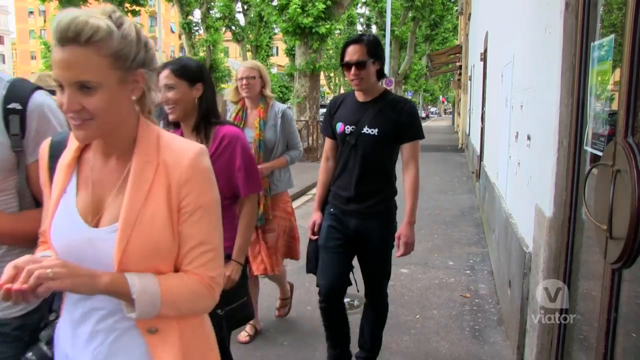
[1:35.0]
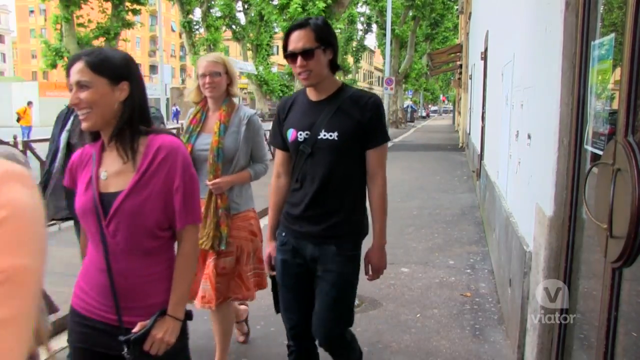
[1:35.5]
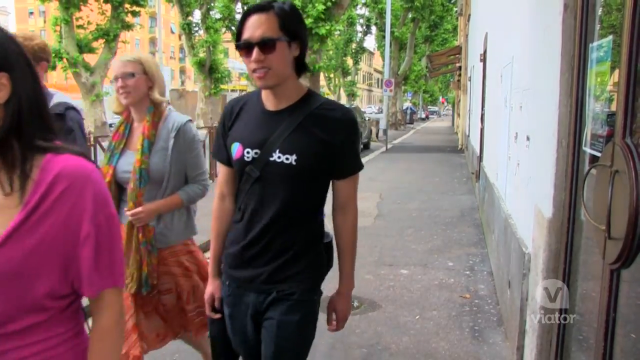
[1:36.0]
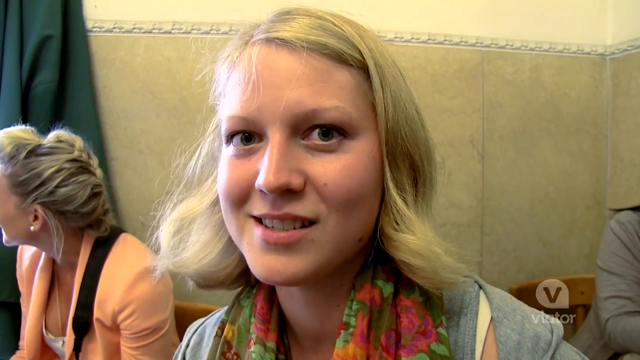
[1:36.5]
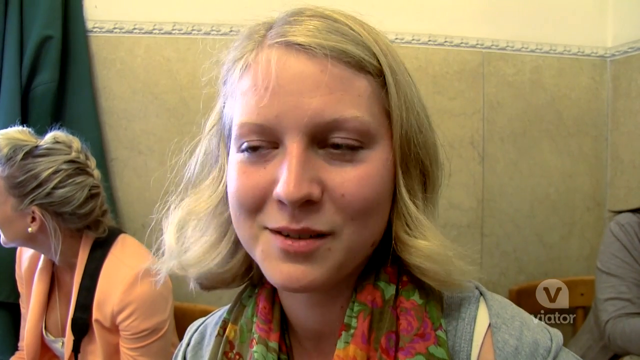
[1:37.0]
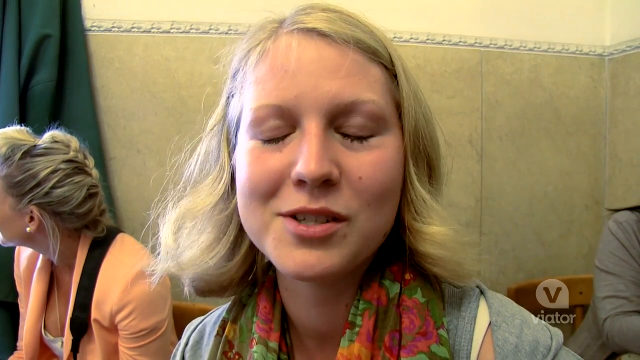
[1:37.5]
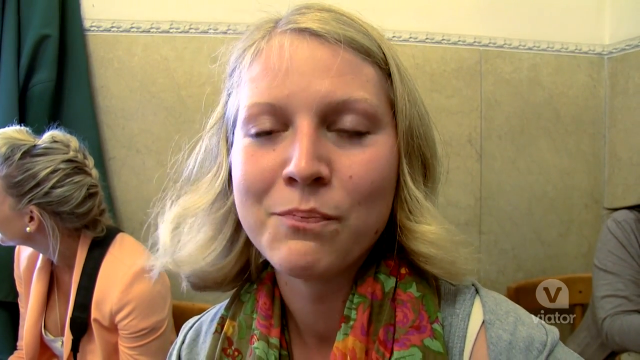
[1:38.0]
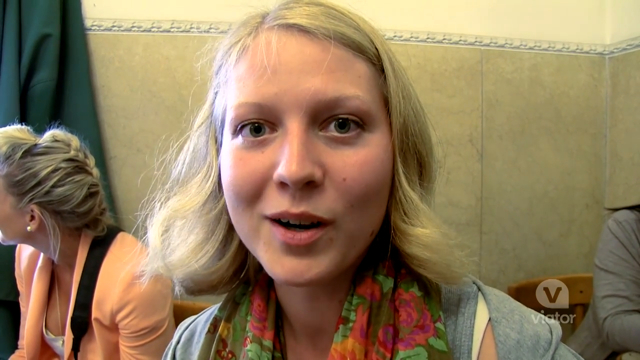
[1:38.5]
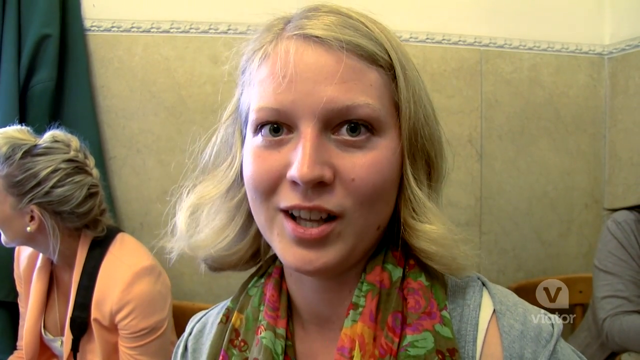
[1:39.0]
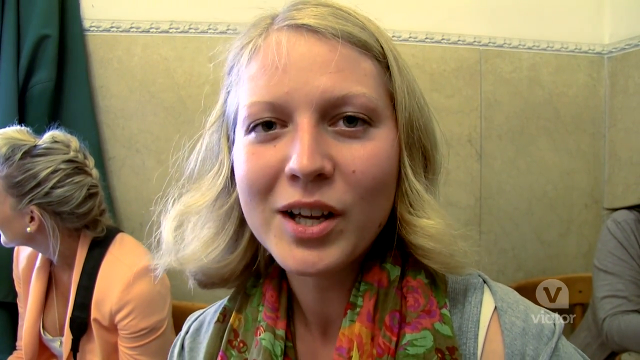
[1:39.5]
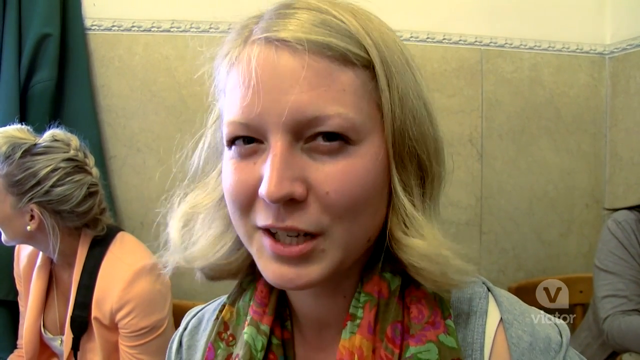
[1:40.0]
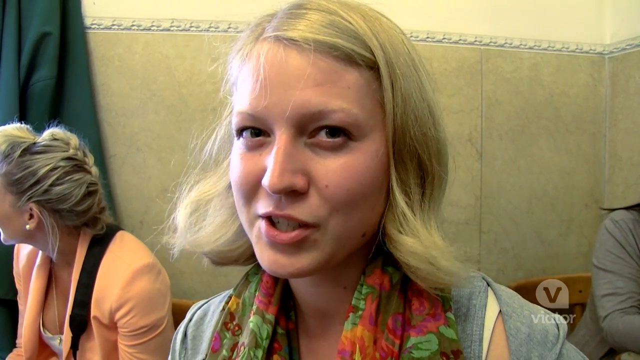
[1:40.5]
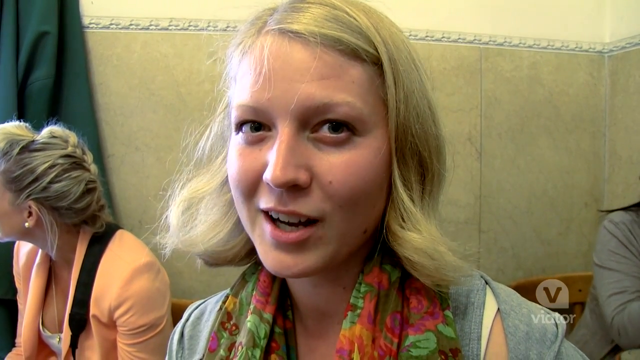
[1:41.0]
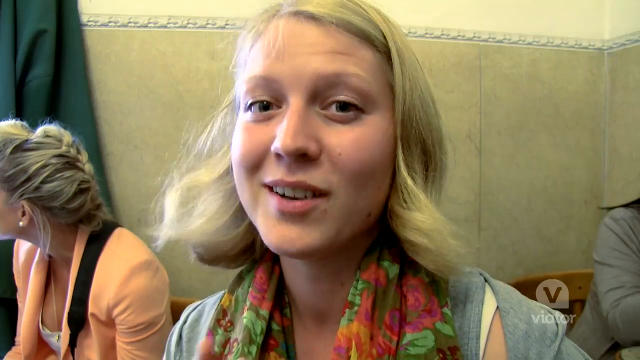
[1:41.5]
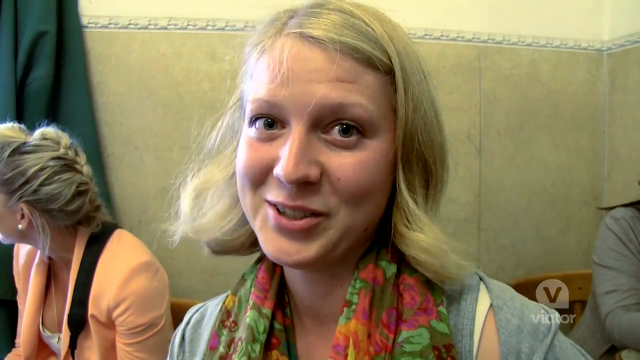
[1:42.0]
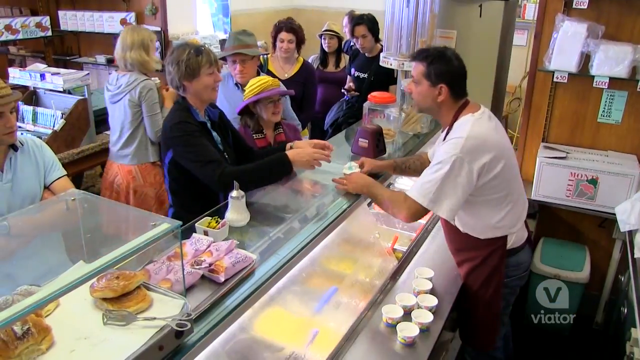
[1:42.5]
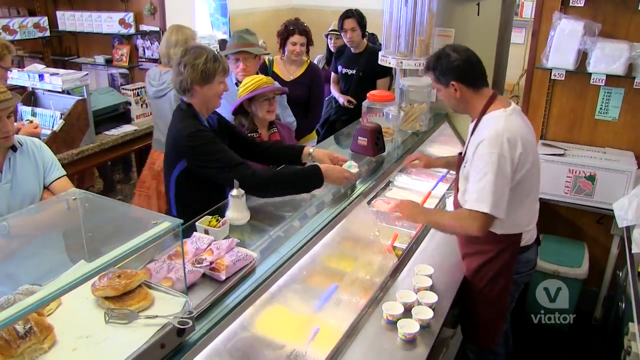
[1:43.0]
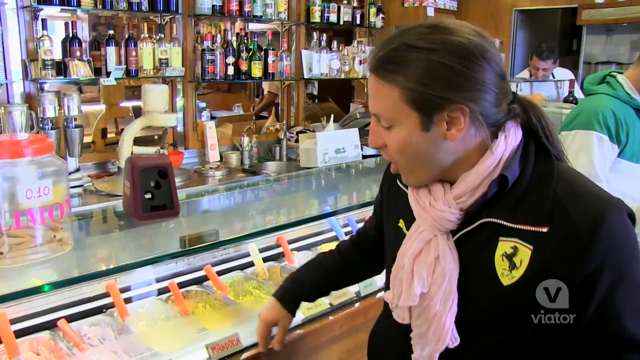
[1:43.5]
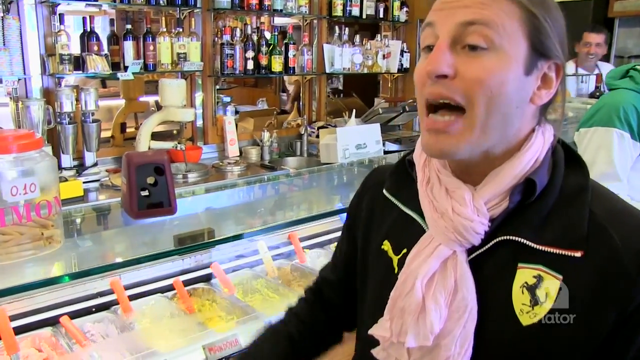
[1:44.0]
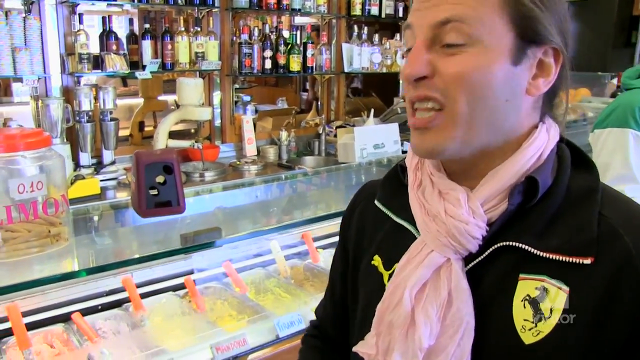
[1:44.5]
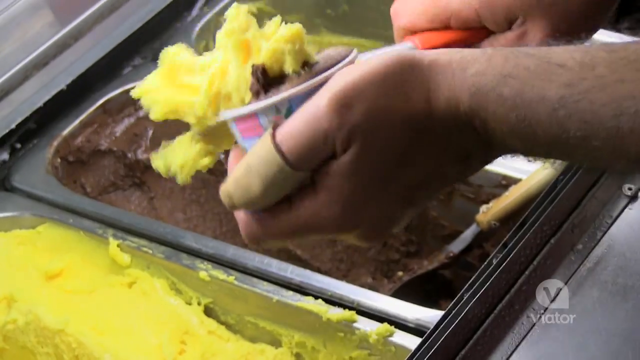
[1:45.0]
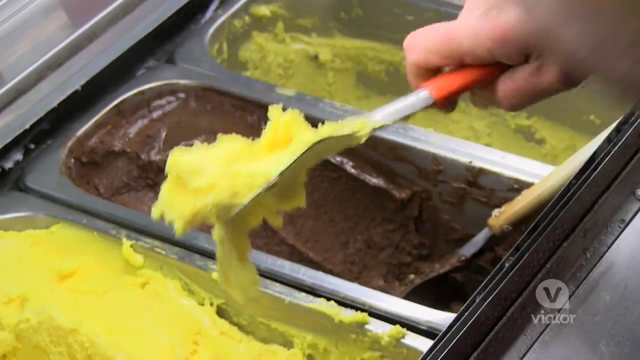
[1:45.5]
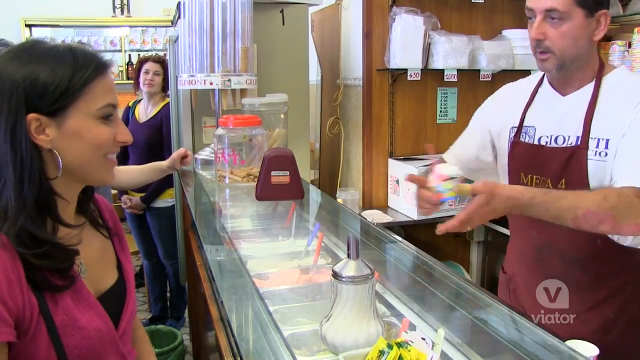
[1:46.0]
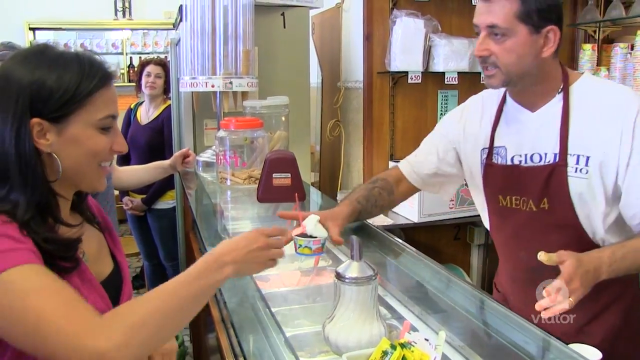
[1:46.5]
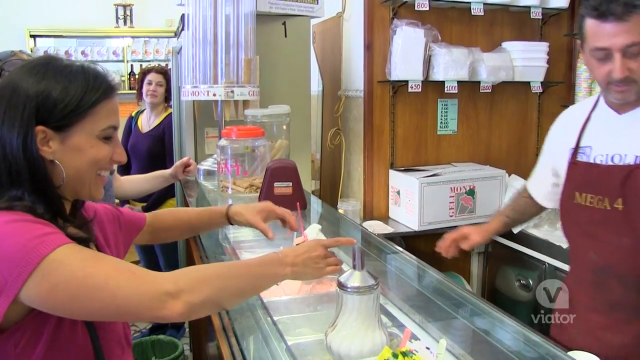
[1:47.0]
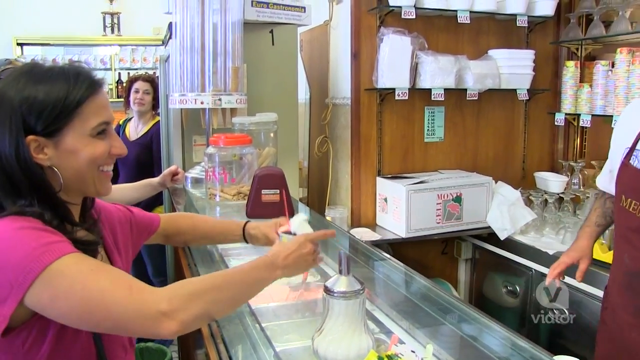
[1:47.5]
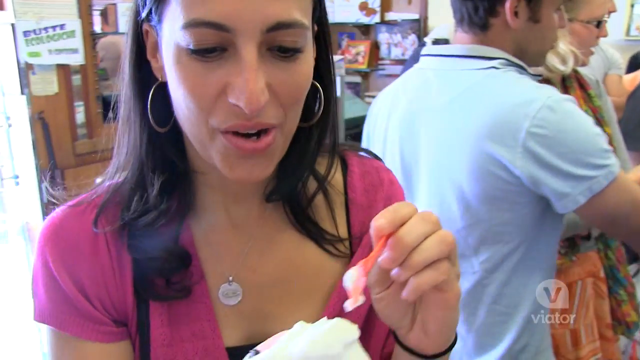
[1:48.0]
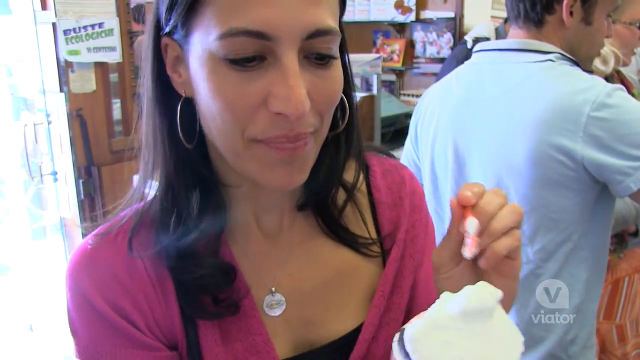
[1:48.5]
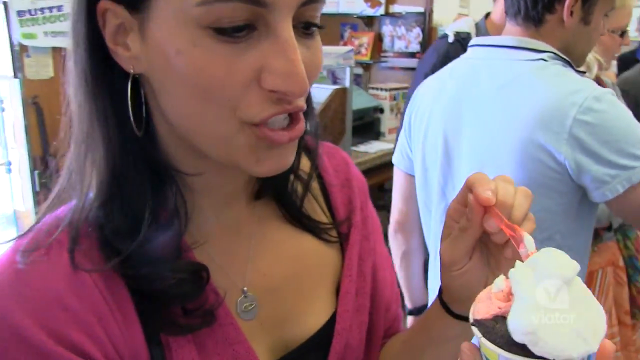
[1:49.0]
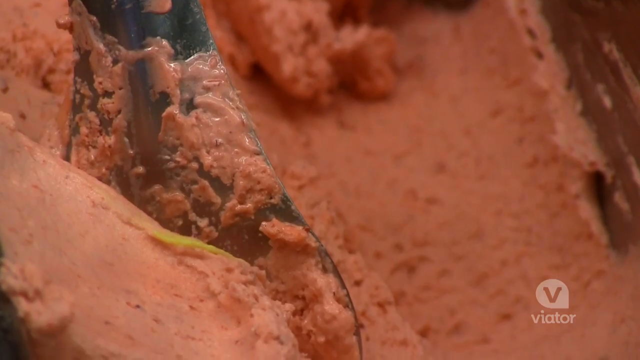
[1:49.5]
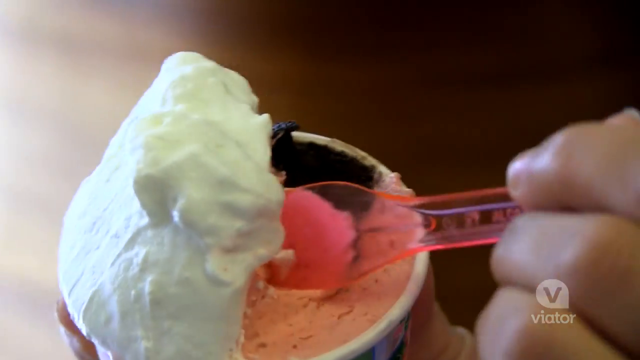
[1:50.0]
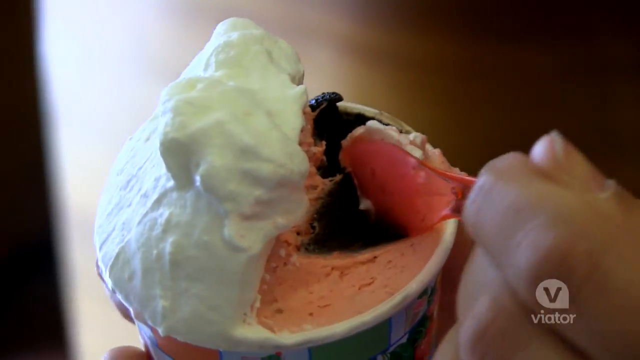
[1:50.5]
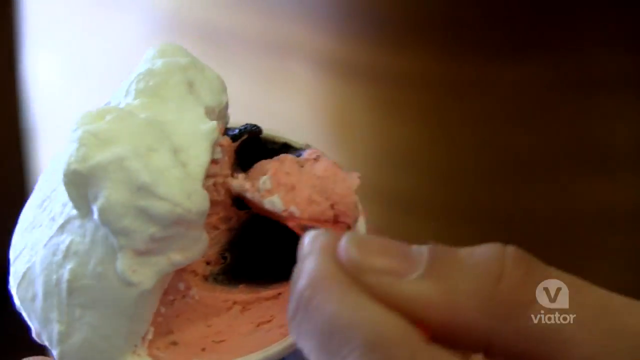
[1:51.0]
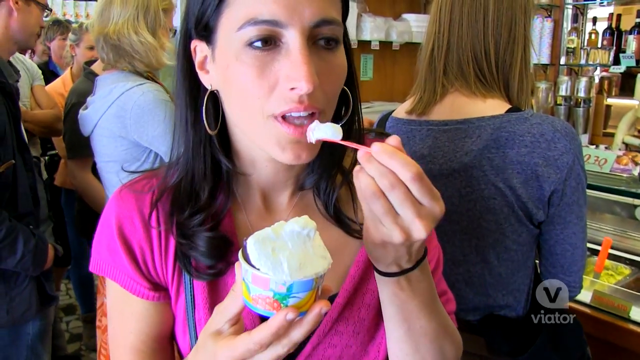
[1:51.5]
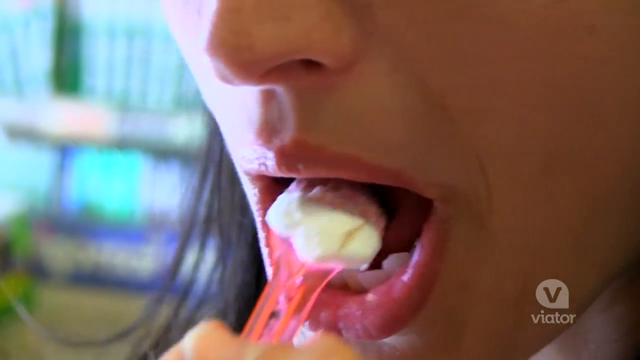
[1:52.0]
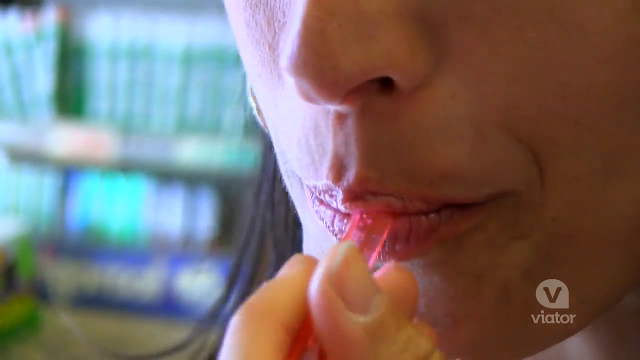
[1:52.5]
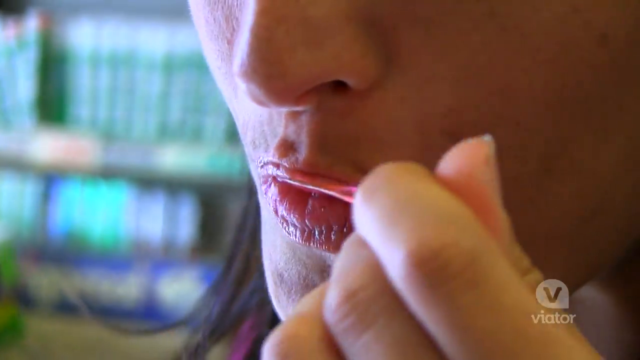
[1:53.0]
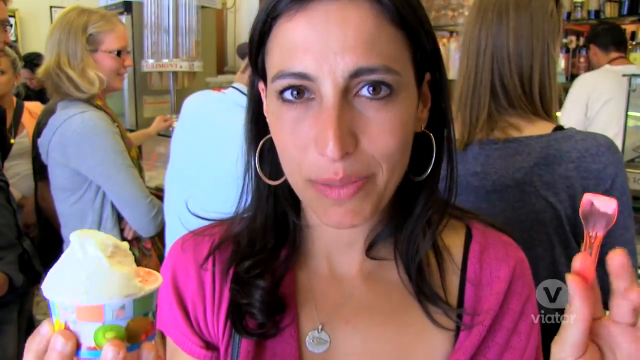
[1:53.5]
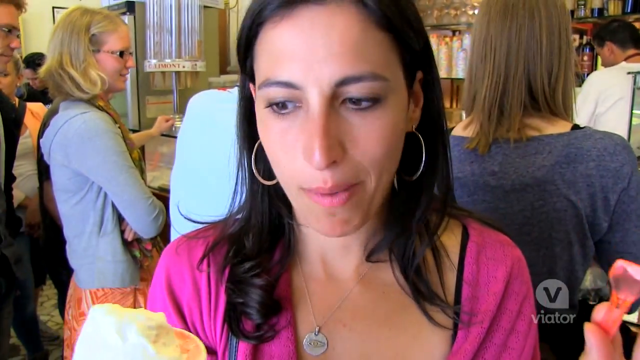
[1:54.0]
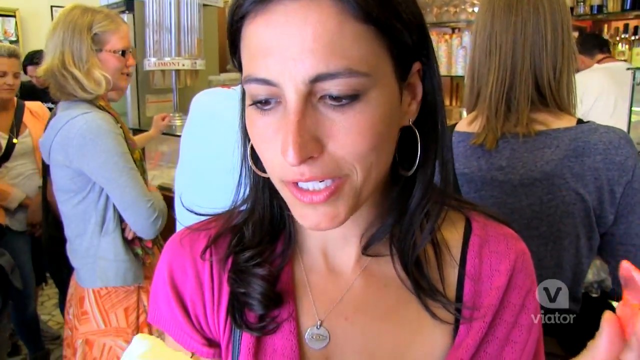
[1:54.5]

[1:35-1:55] People walk down the street. A woman sits talking as if in an interview or to a reporter. A man with long dark hair pulled back in a low ponytail stands wearing a black jacket. A woman with dark hair in a magenta v-neck blouse with a black tank top underneath appears to be eating sorbet or gelato with a small transparent pink spoon, appearing to enjoy it, and talks to someone as if describing how it tastes. Her cup appears to hold at least three different flavors. A man serves gelato to people, and there are many flavors of gelato. People stand or sit around talking as if being interviewed; one of the women sitting and being interviewed has medium-length blonde hair, a pleasant expression, a gray top and a floral print scarf around her neck.